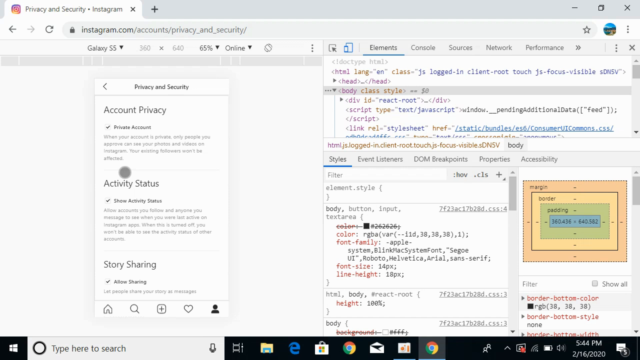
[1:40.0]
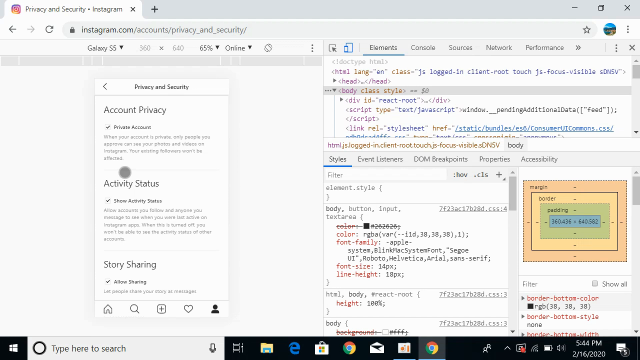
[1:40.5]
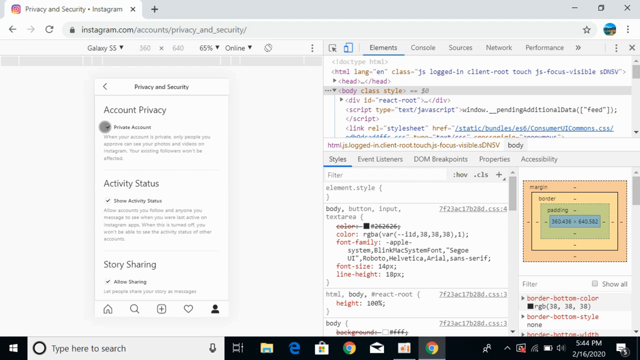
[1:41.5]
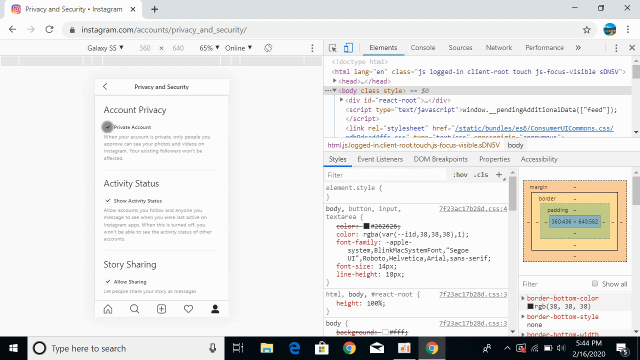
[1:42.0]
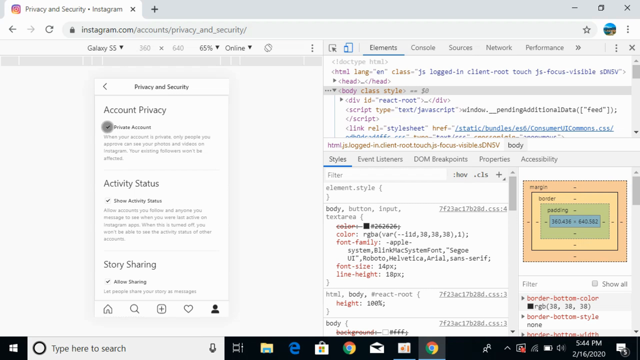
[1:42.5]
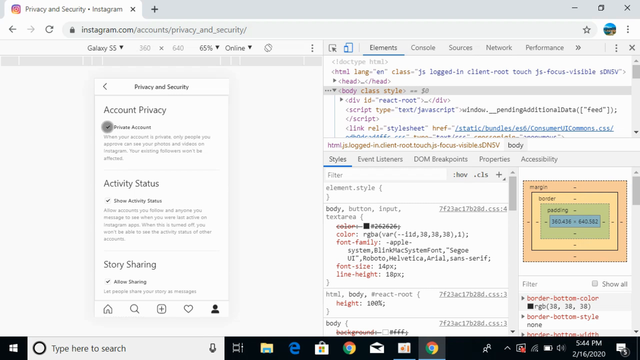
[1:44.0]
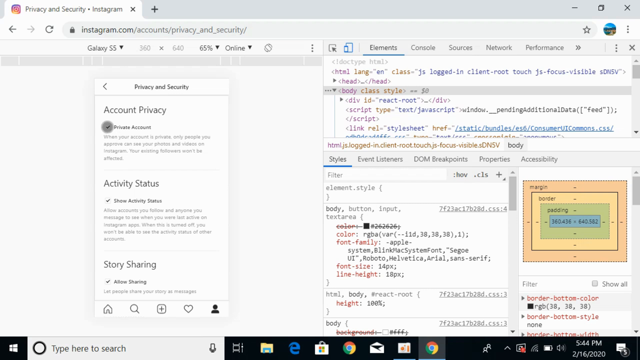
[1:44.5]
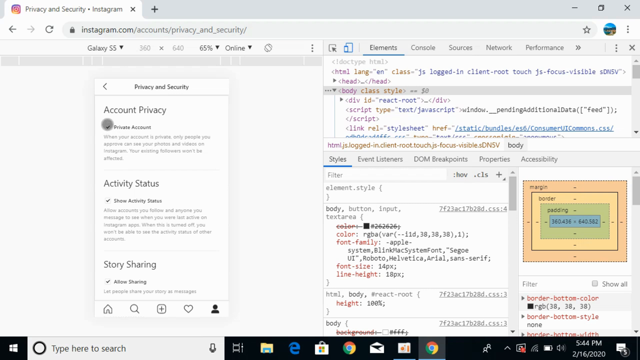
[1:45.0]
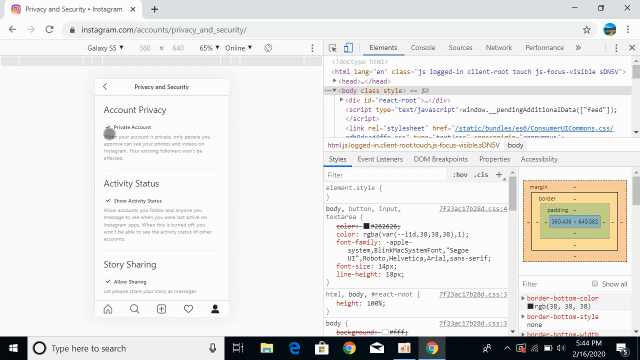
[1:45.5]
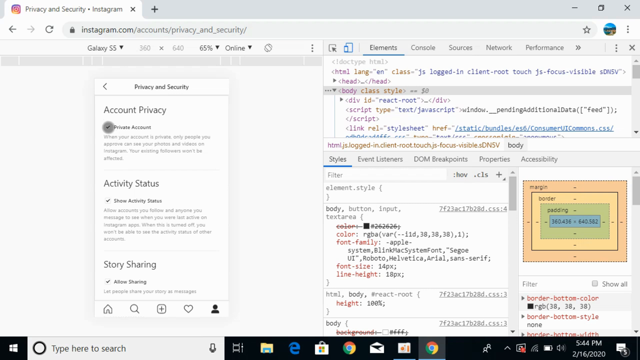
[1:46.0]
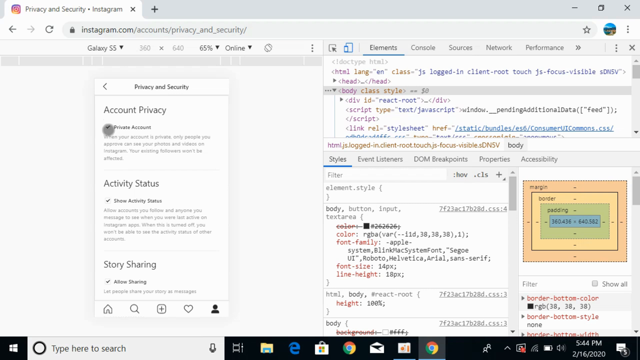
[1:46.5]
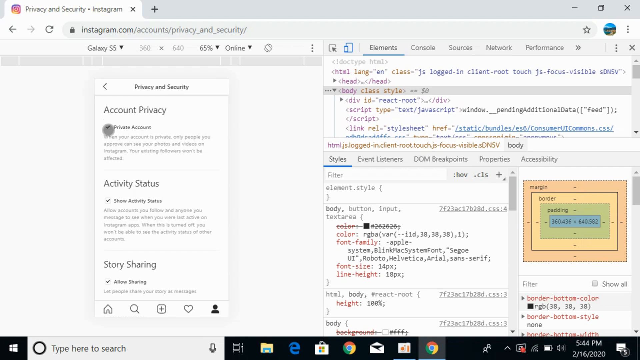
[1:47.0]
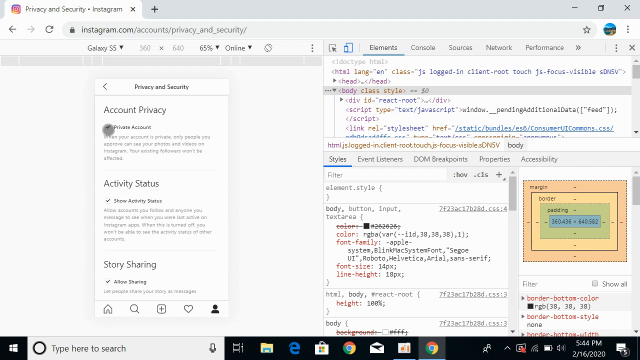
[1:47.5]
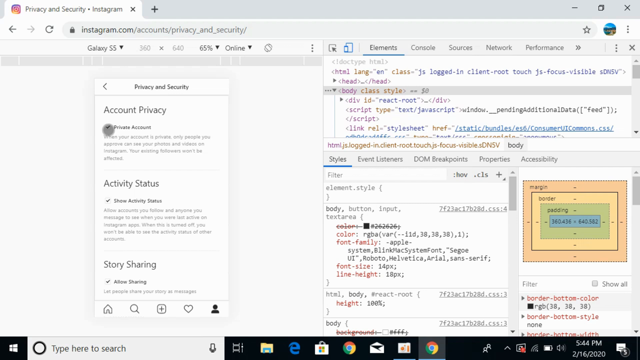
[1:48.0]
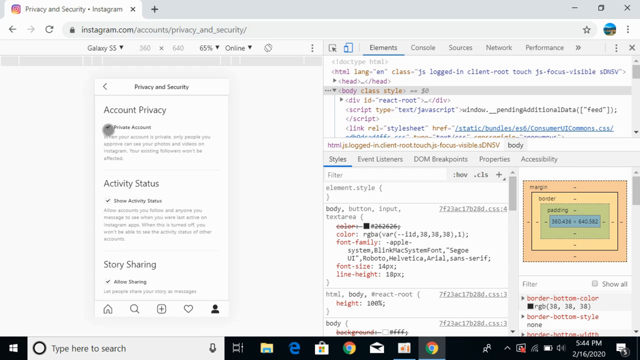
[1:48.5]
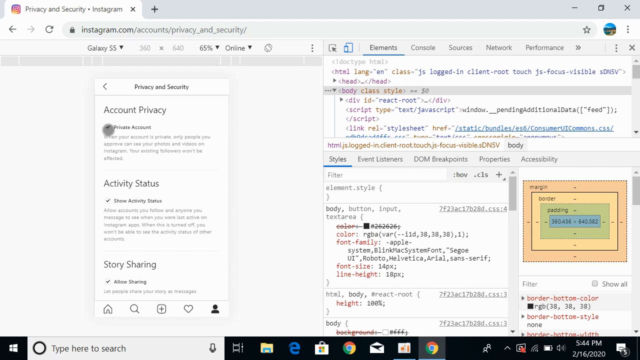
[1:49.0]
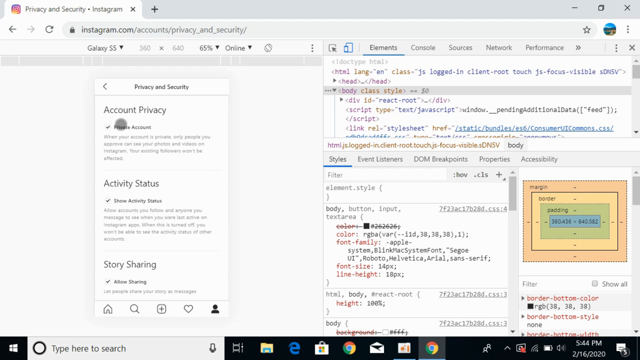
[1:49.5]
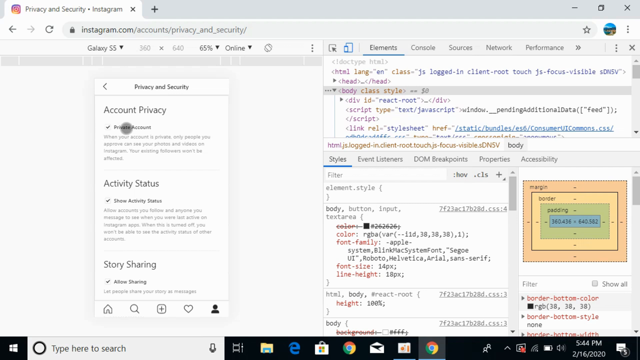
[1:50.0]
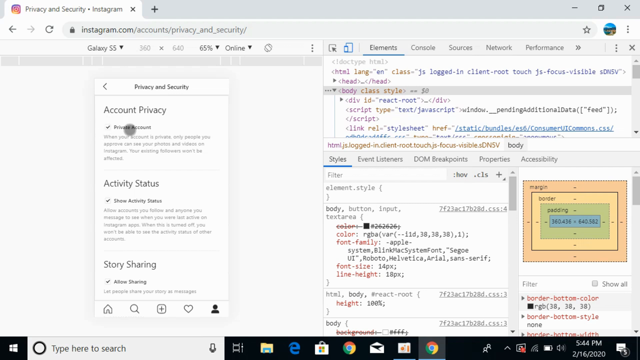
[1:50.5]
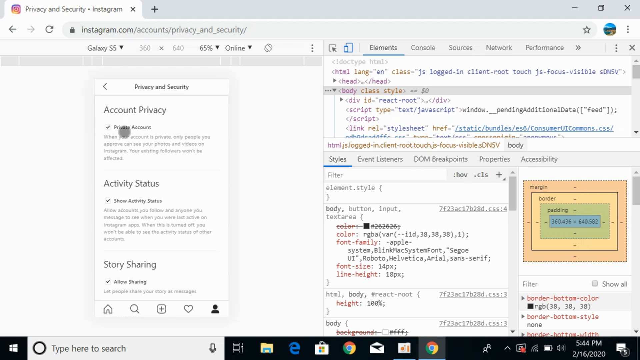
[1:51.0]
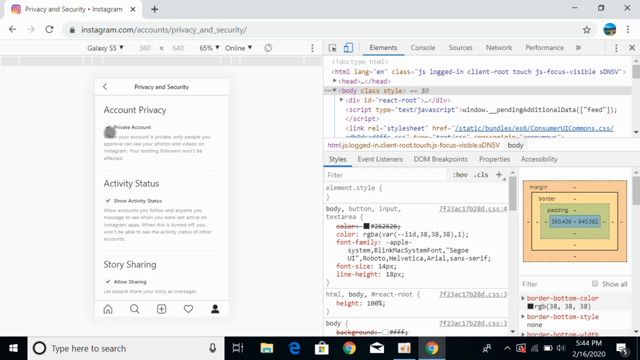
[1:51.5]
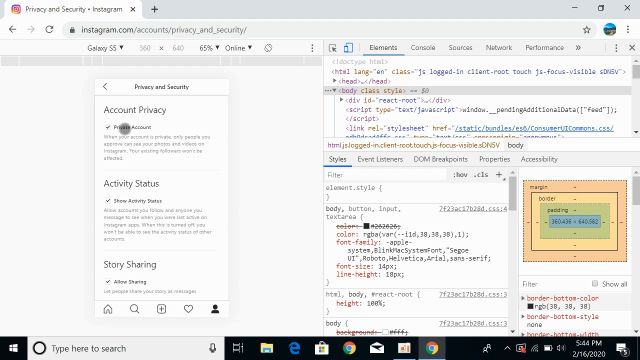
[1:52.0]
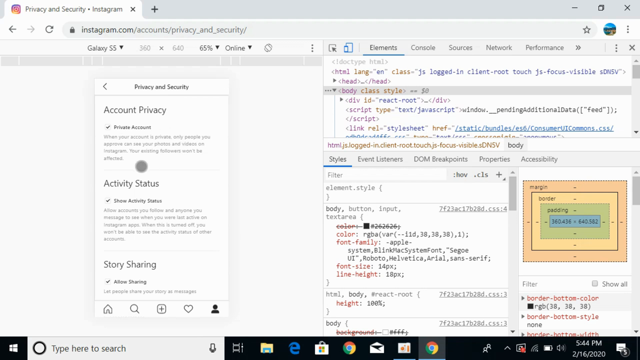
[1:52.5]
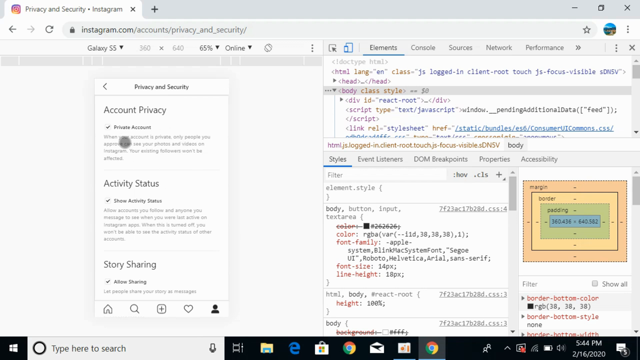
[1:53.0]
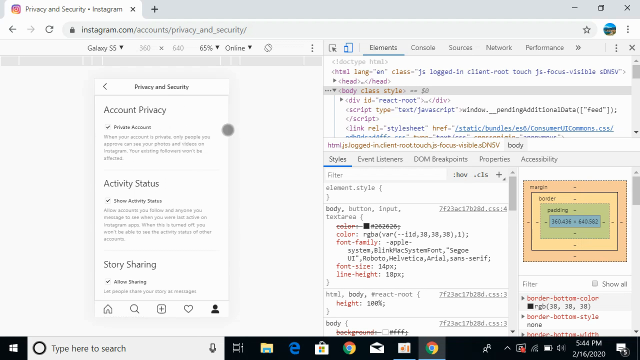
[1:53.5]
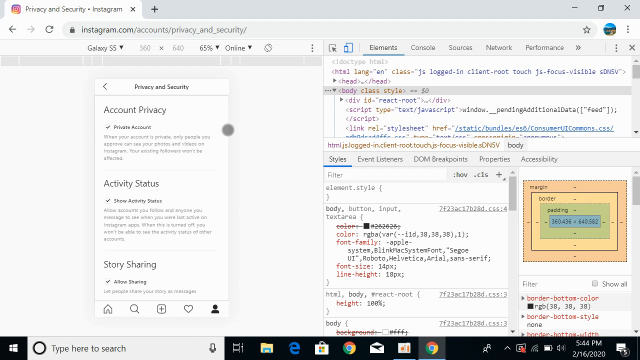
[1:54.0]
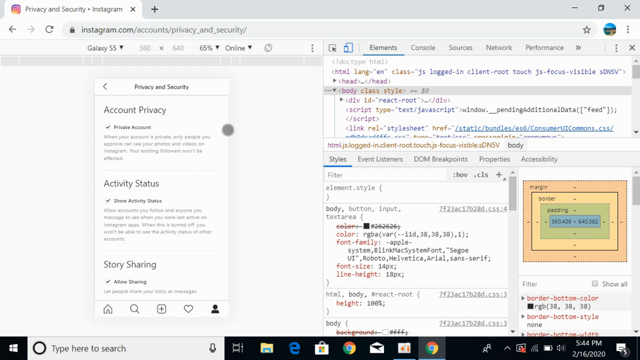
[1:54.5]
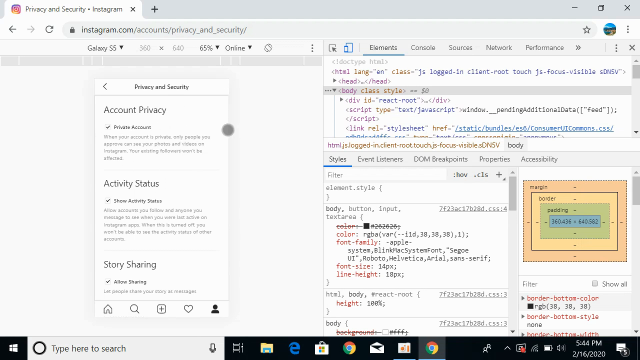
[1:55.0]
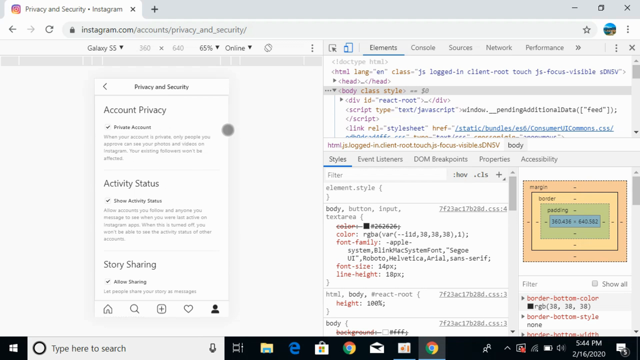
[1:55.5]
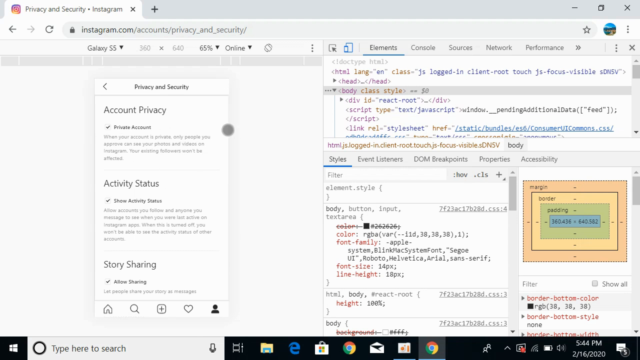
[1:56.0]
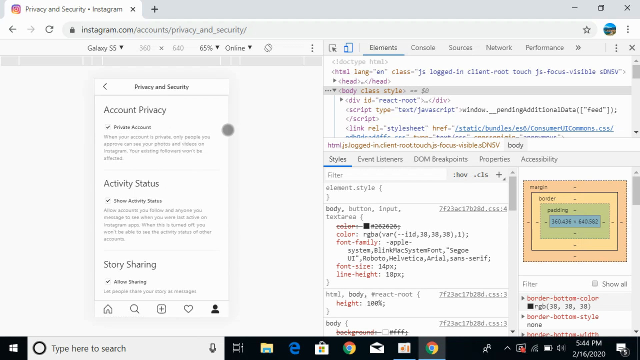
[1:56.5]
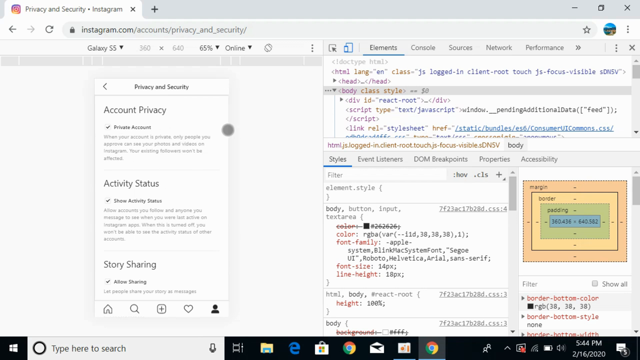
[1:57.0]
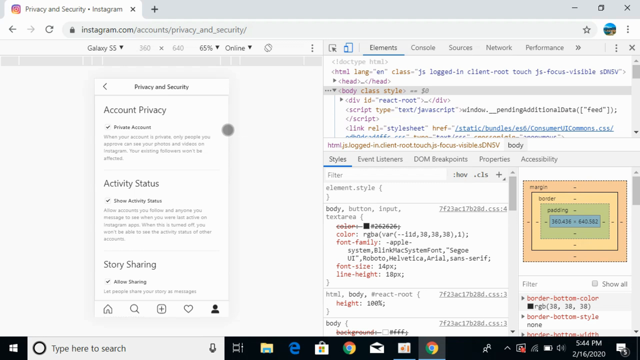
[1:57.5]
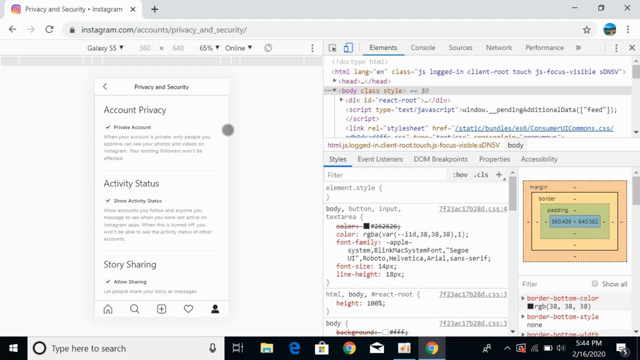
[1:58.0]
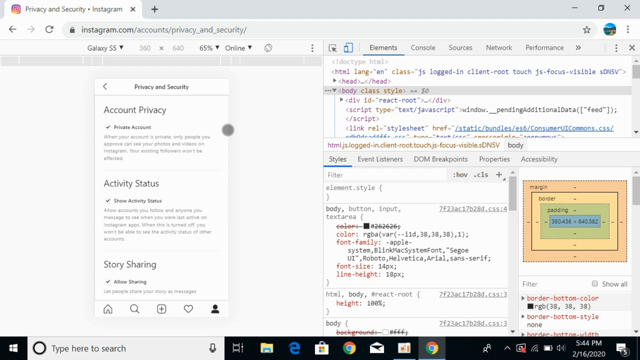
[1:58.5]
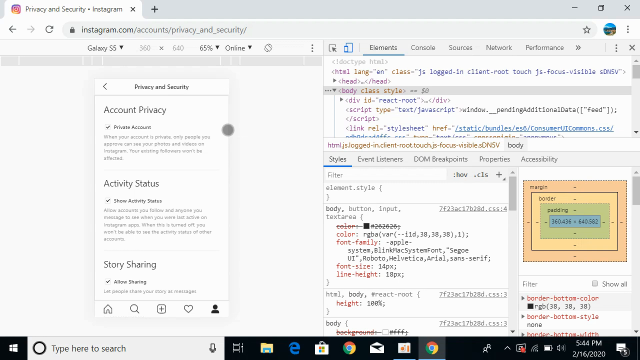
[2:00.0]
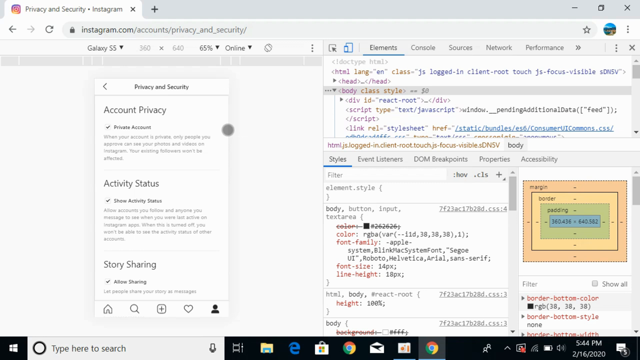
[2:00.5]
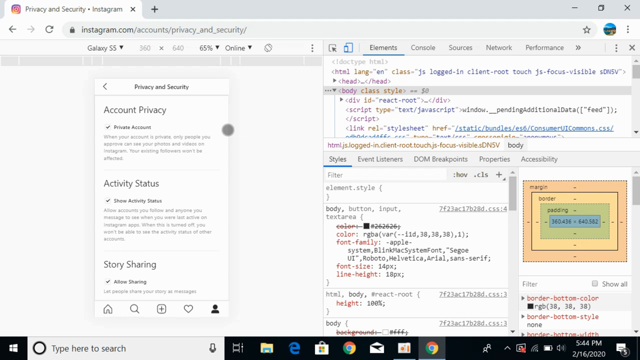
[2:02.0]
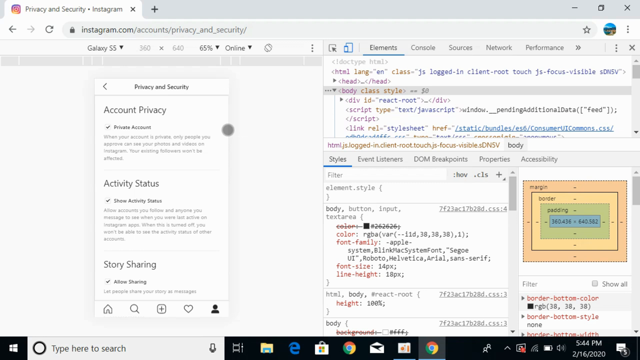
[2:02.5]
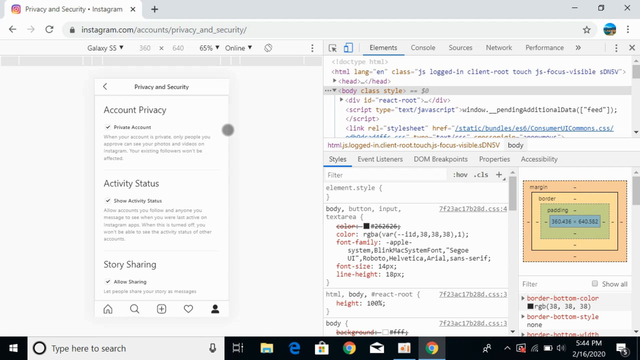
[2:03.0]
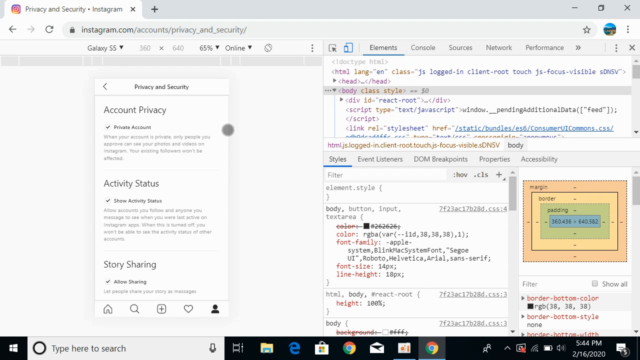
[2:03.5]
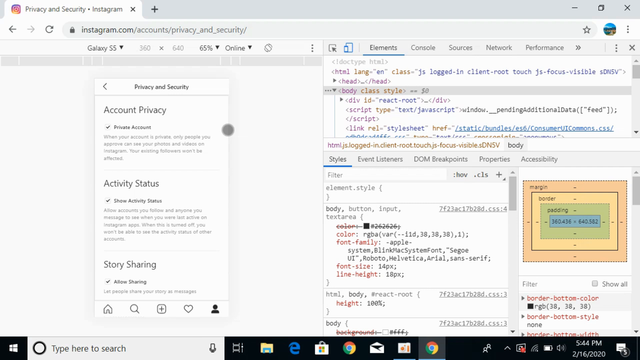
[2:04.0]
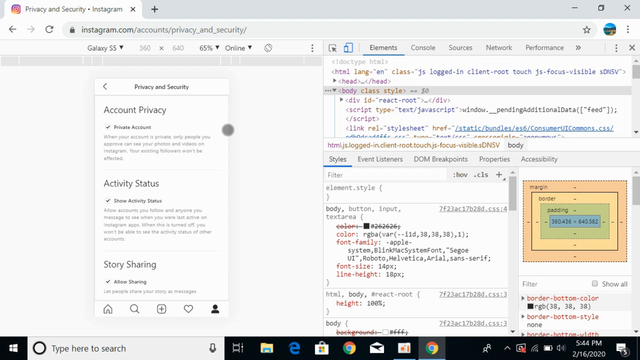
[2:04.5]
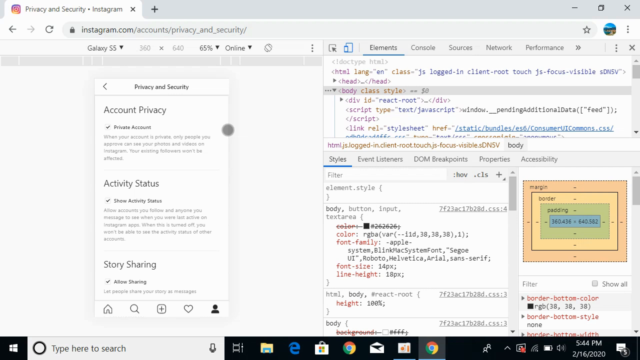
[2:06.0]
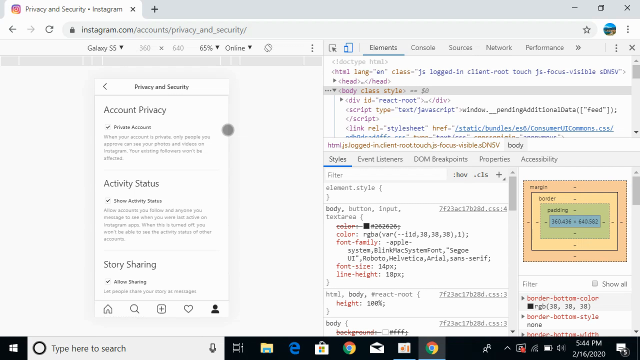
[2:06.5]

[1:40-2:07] The video covers how to make an Instagram account private on a laptop. A computer screen running the Windows operating system is shown. The user clicks on Google, types "Instagram" into the search bar and goes to a profile of a man in his 40s. The user then goes to the three dots in the corner, where a drop-down menu shows the more tools option. They clear the browsing data, hover the mouse over it, and scroll down to the developer tools. The window then splits into two, with the developer tools on the left and the Instagram profile of the man on the right. The mouse clicks on the Galaxy S3 tab, and the user refreshes the Instagram page. They click on the details of the Instagram profile and scroll through the many details shown, then go to account privacy and security, where the mouse keeps hovering on account privacy and security.